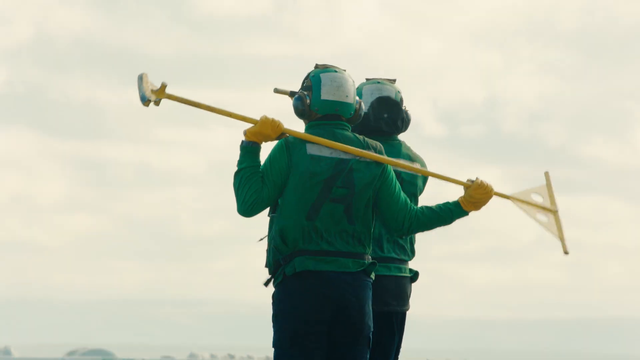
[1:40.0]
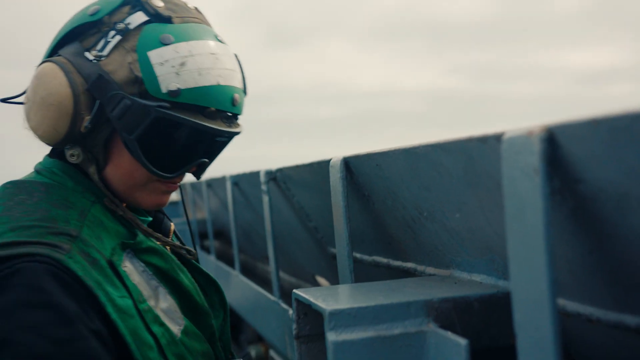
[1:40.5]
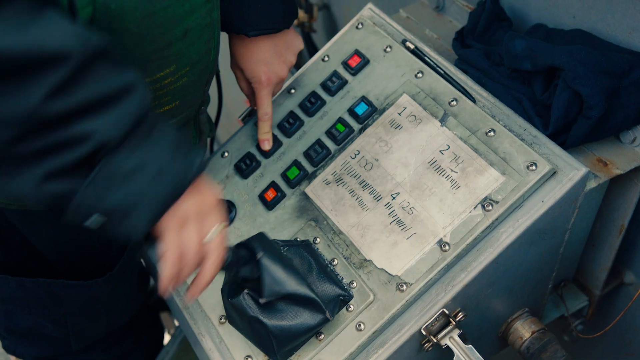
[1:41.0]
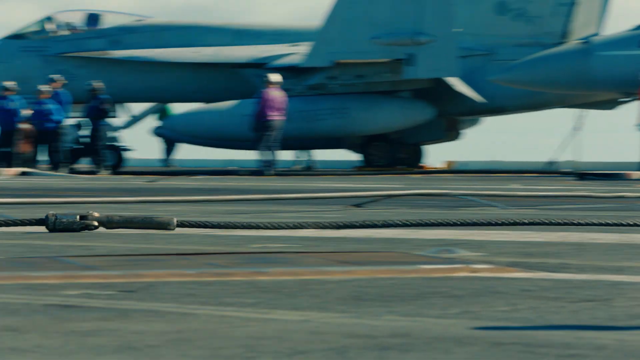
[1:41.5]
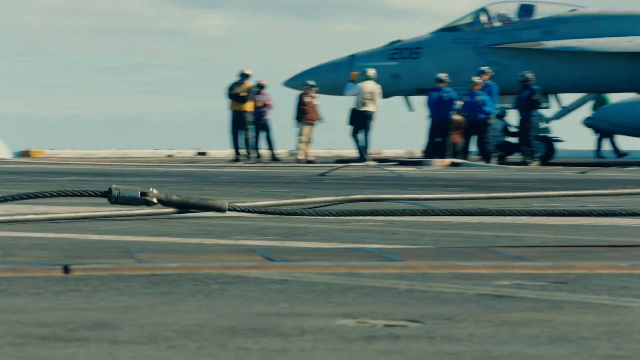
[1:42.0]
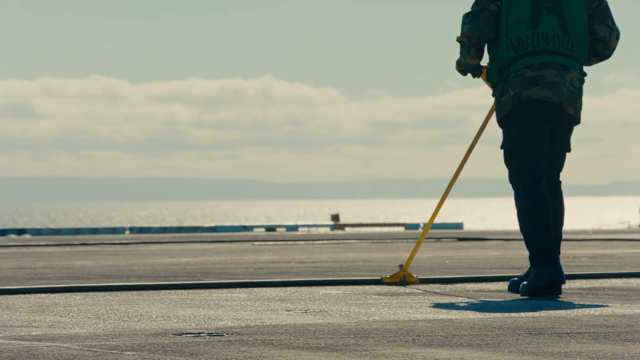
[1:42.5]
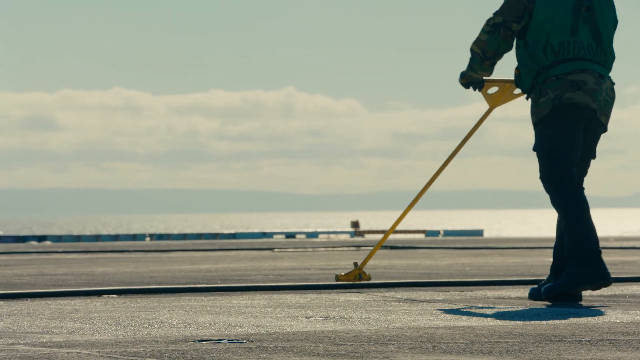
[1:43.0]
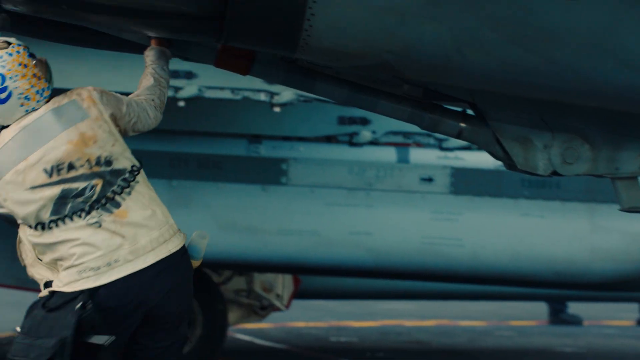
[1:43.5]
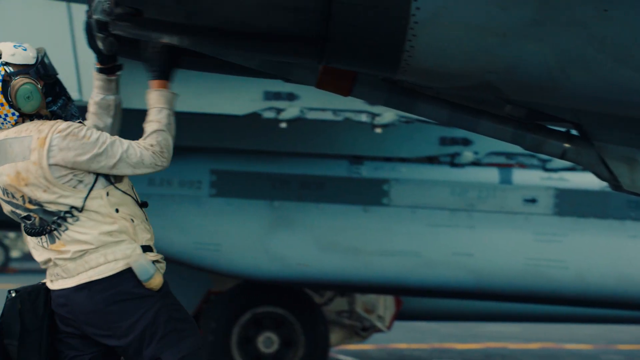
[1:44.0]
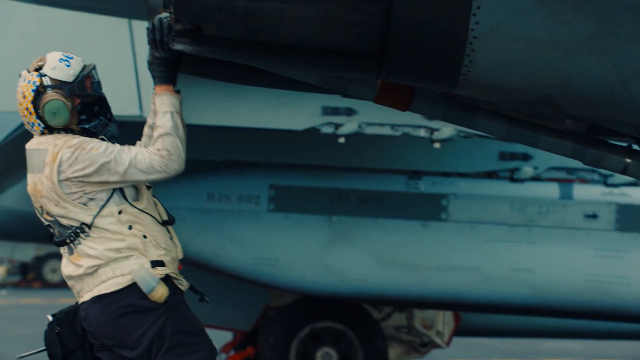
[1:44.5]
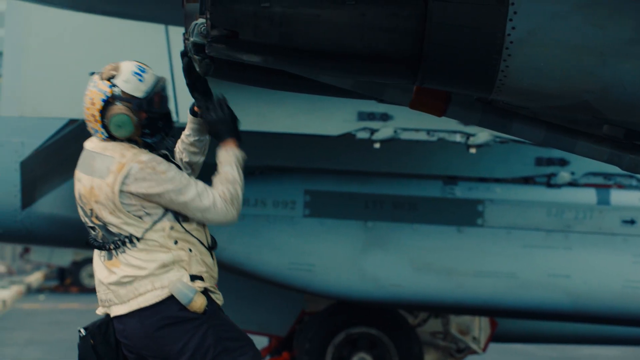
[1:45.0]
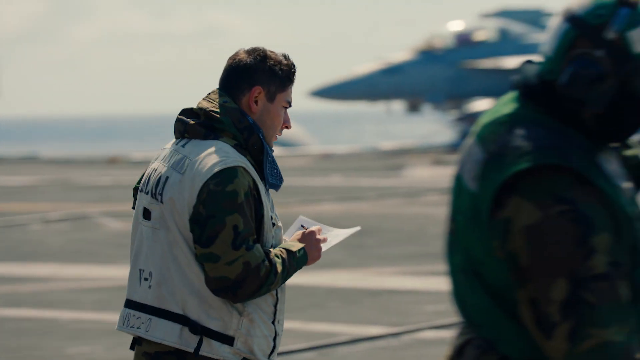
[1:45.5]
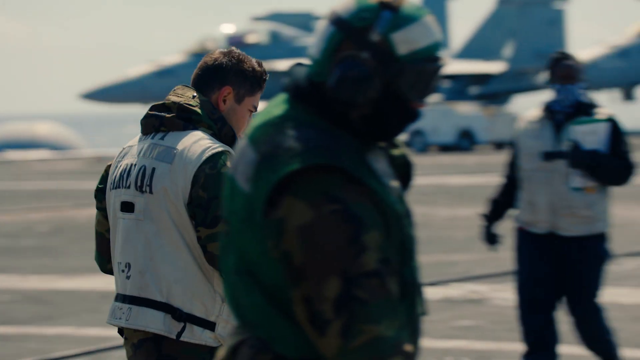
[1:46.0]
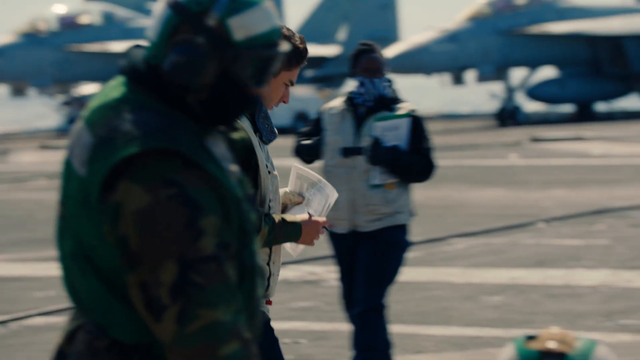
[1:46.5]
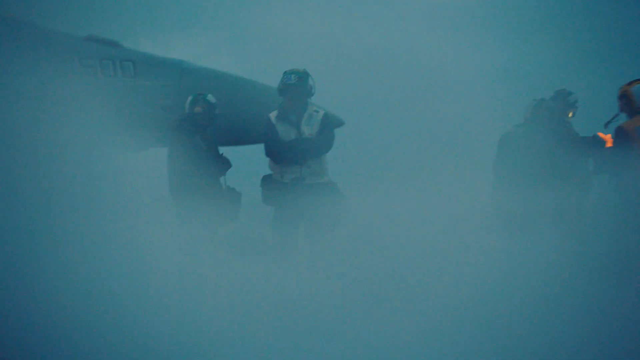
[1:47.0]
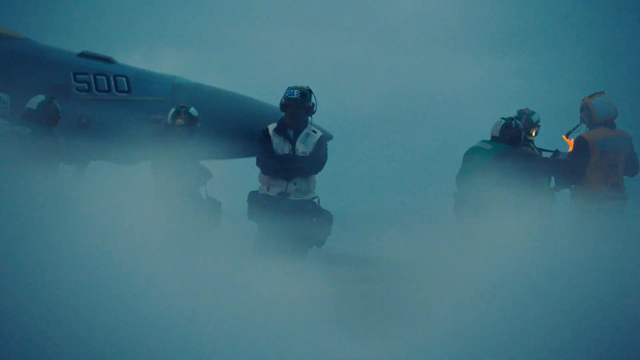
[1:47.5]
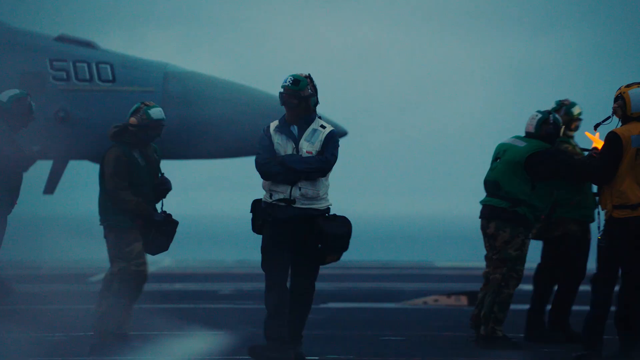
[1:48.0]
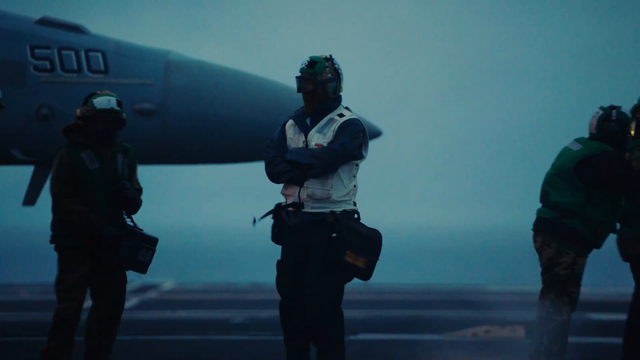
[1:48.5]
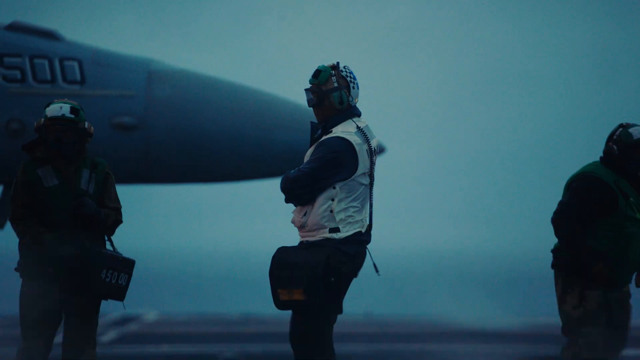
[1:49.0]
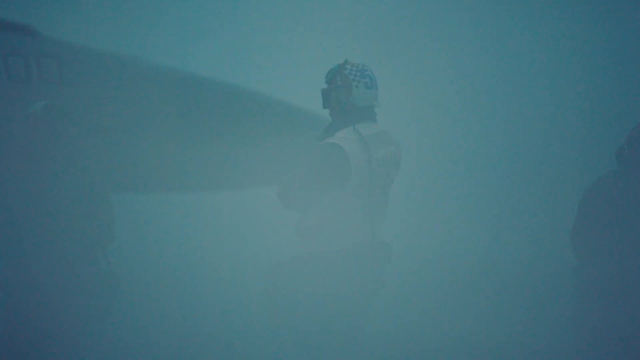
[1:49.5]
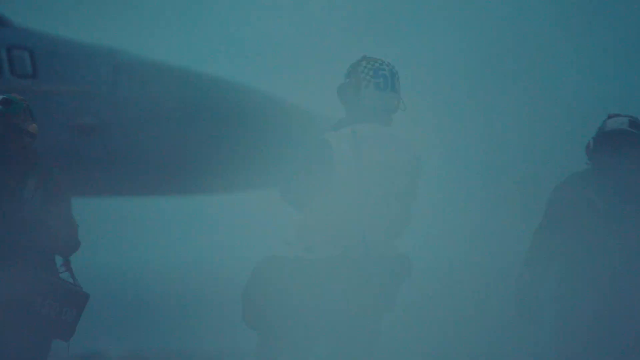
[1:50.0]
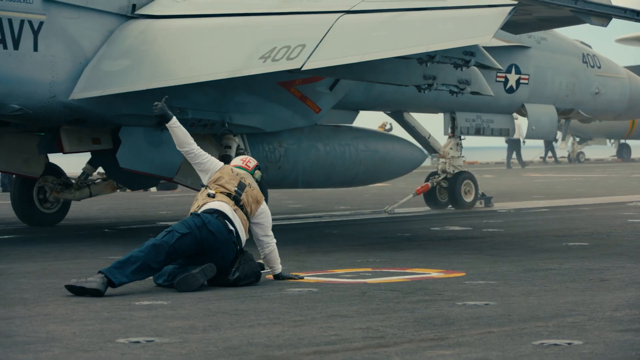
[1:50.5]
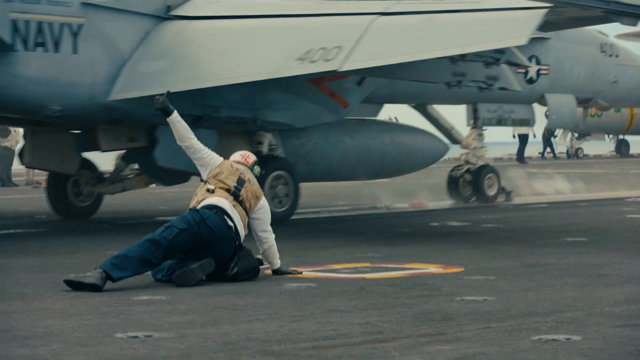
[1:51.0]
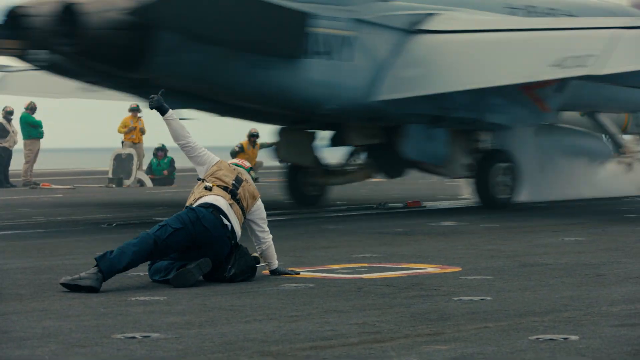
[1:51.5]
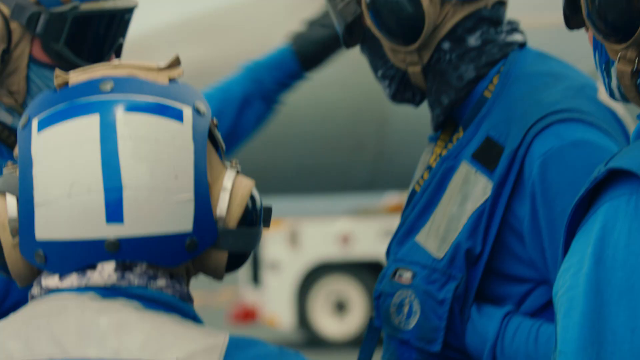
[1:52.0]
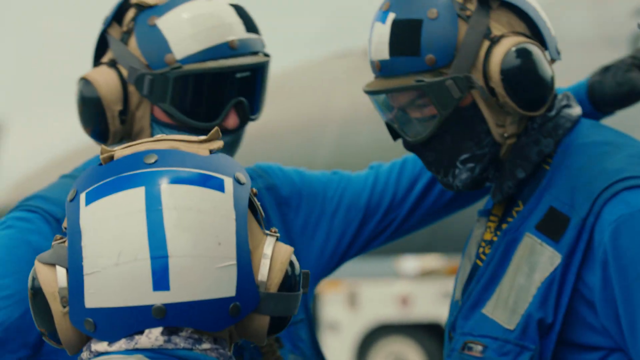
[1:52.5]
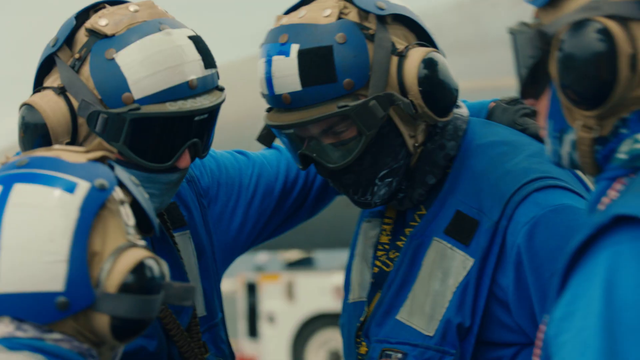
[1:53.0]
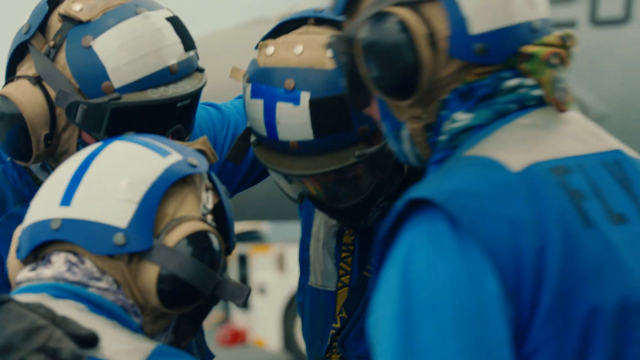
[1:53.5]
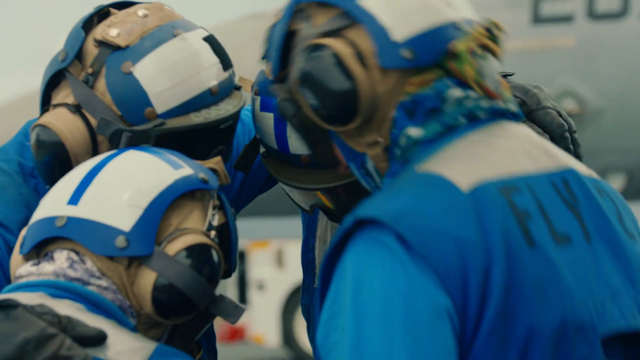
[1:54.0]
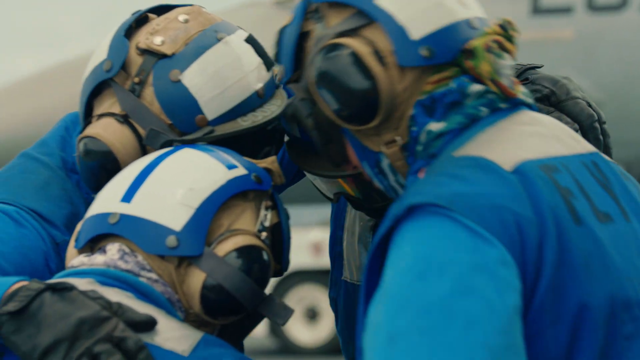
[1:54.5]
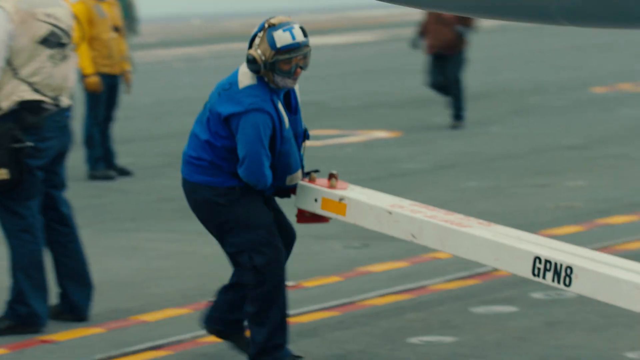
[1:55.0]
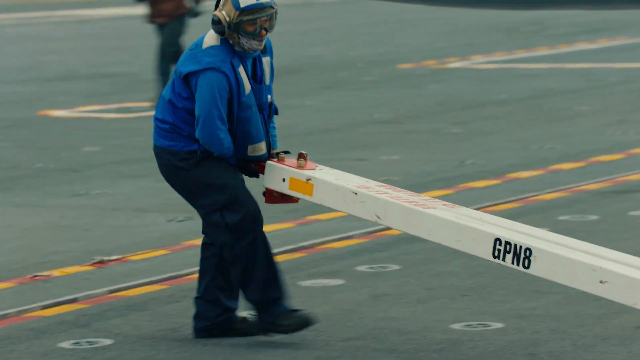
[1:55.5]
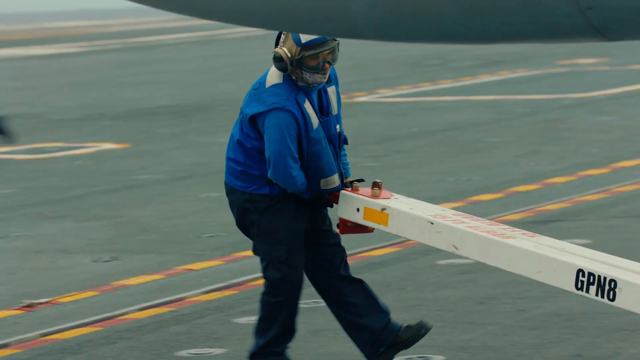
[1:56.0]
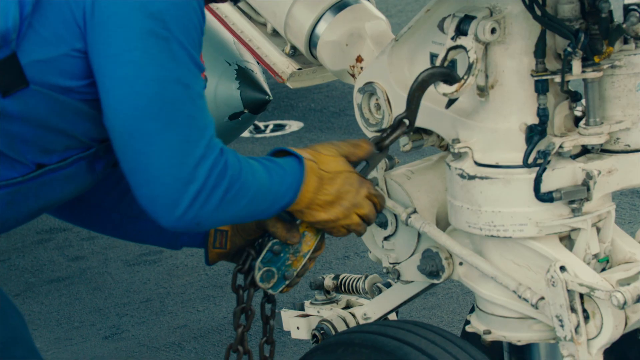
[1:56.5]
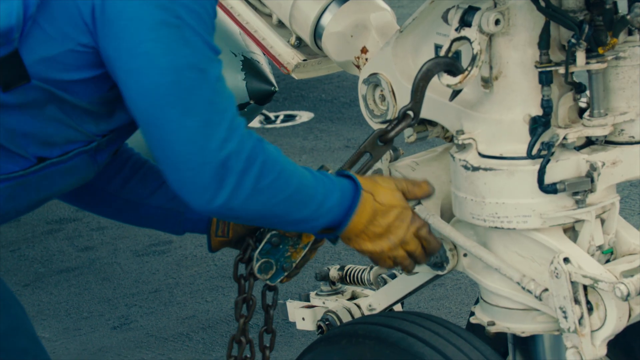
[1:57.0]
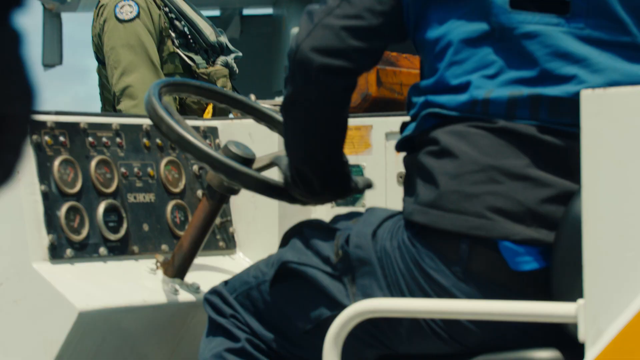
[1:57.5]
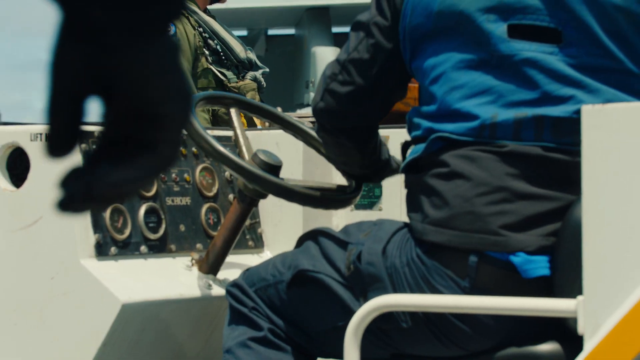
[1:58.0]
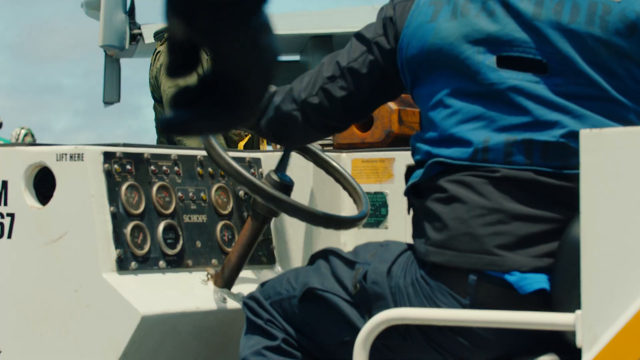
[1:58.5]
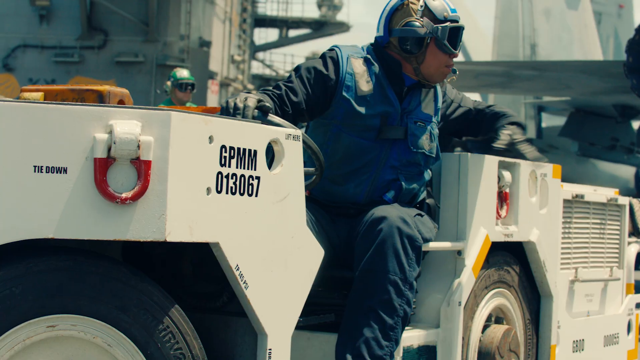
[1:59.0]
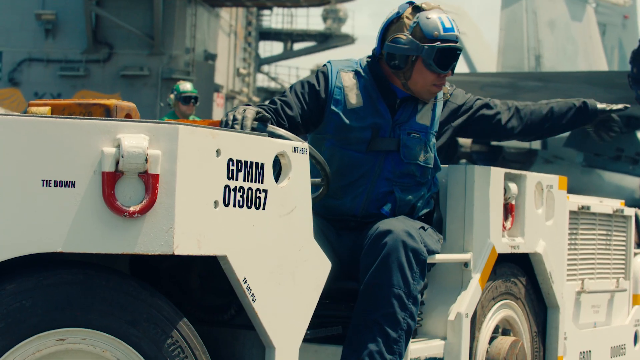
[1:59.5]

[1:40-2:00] A close-up shows an aircraft controller in green, followed by someone flipping a large switch. A long metal thing is stretched out along the tarmac, and someone pushes it with something similar to a broom. Another controller works underneath a plane in close-up, and a man with a piece of paper and a pen walks along the tarmac. A kind of night or low-light view shows several people standing on the tarmac as big white clouds or fog move across the screen and obscure them. A controller underneath the wing of a plane gives a thumbs up, and the plane takes off toward the right. Three aircraft controllers in blue huddle in close-up, a fourth joins, and they all kind of bump their helmets together. Another crew member in blue walks across the tarmac holding the end of a long beam with the text "GPN8". A close-up shows a chain with a hook being affixed to a similar device on the front wheel, though the close-up makes it unclear whether it is the same one. Another aircraft controller in blue sits on one of those vehicles; there is a close-up of the wheel, then the person looks behind and gestures at someone.